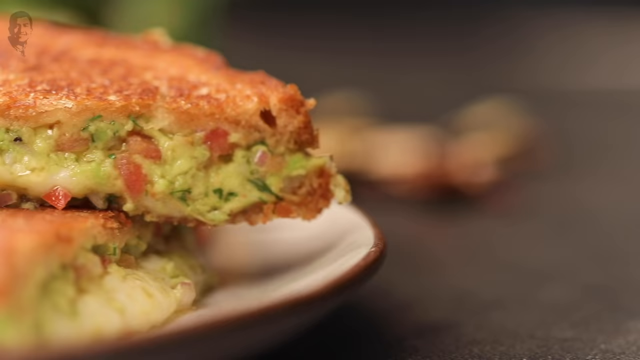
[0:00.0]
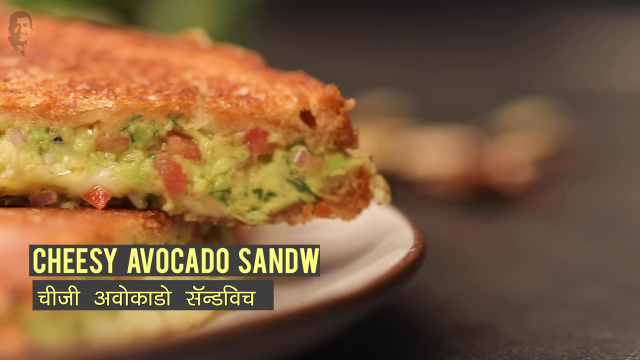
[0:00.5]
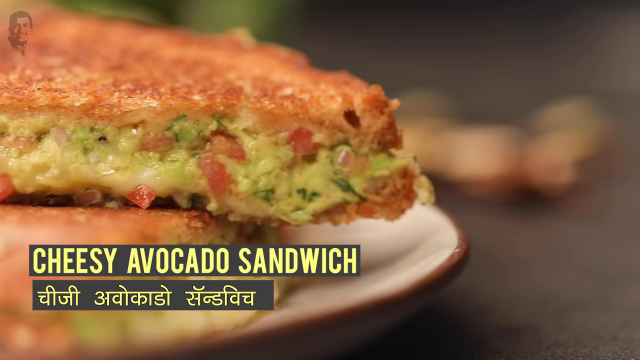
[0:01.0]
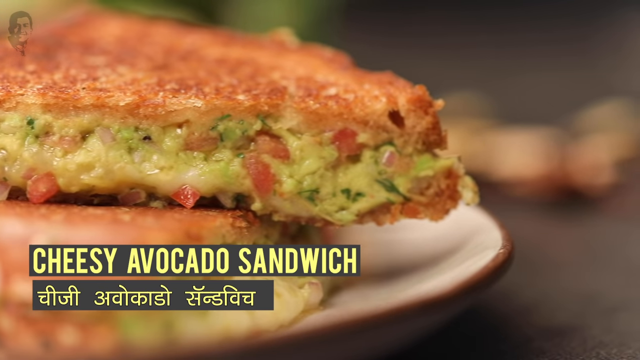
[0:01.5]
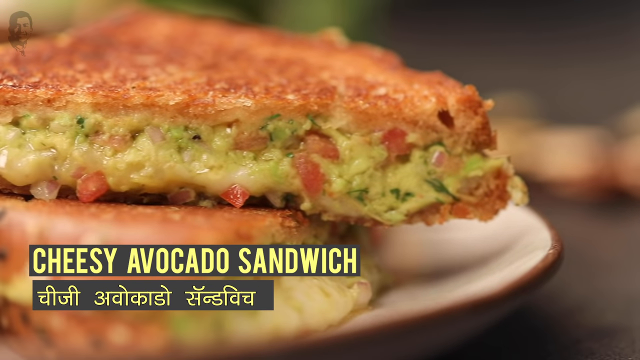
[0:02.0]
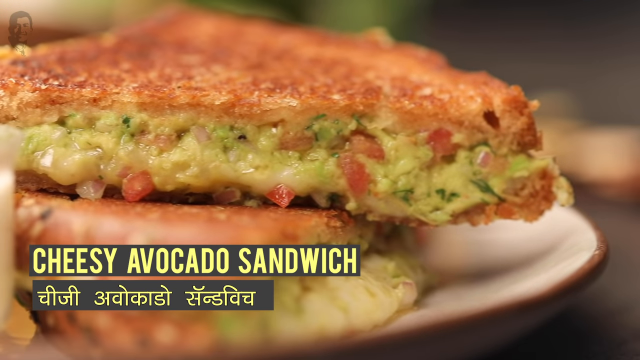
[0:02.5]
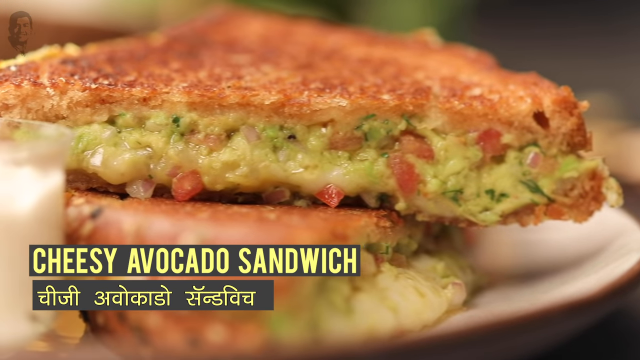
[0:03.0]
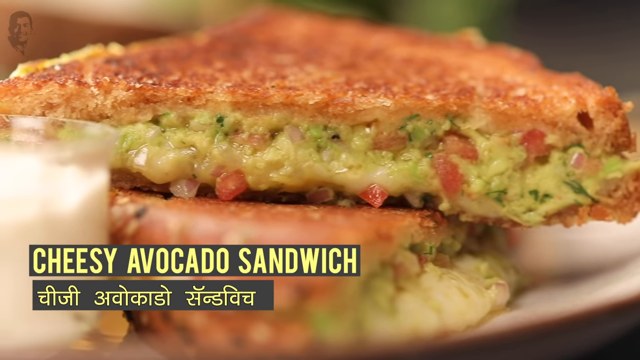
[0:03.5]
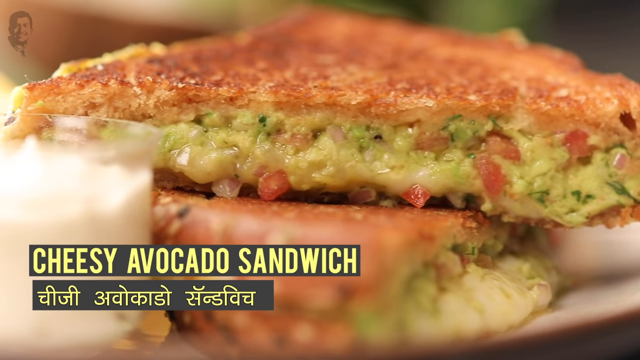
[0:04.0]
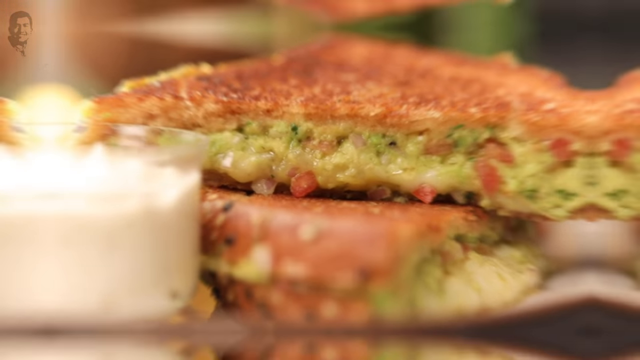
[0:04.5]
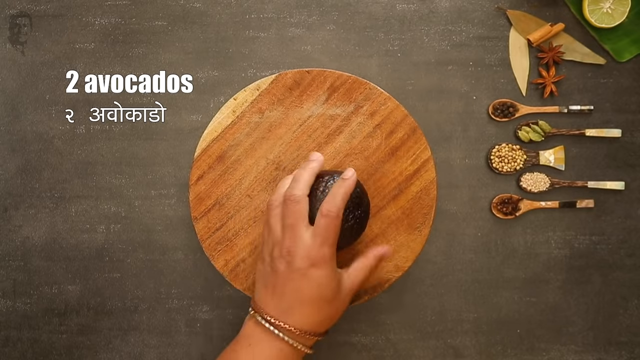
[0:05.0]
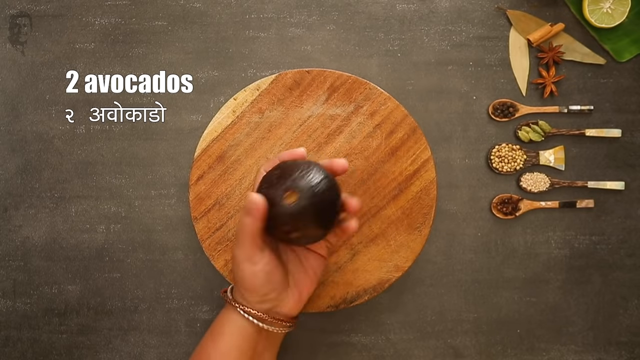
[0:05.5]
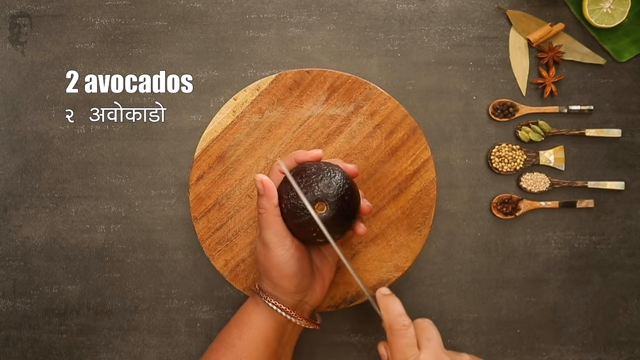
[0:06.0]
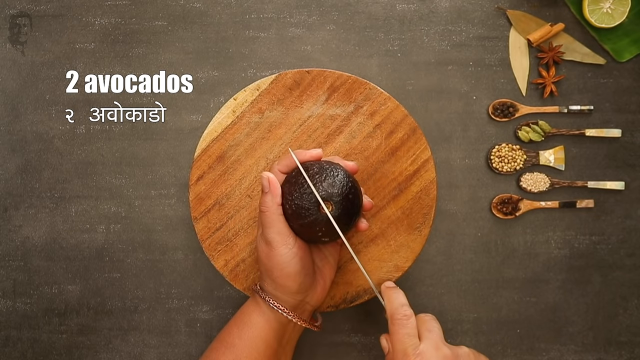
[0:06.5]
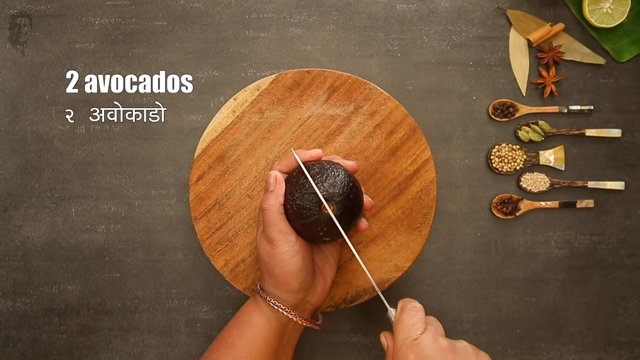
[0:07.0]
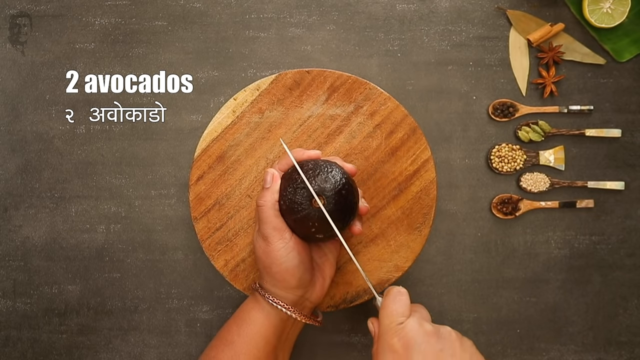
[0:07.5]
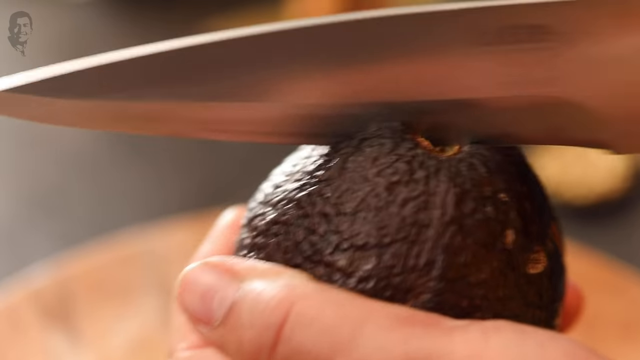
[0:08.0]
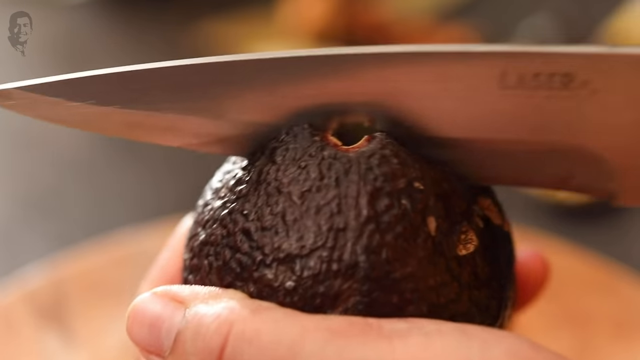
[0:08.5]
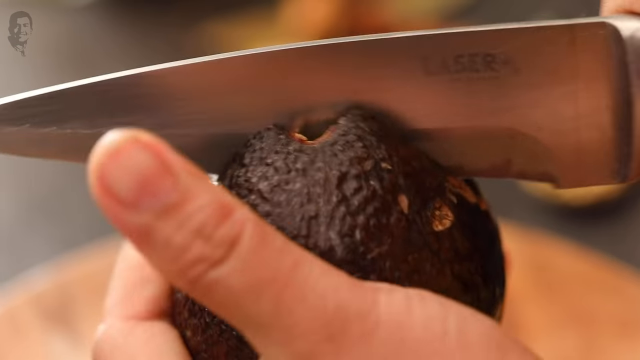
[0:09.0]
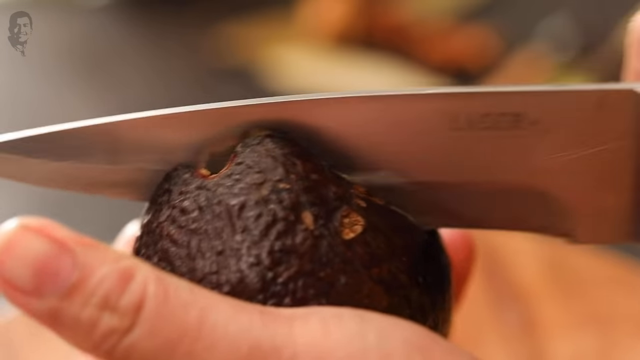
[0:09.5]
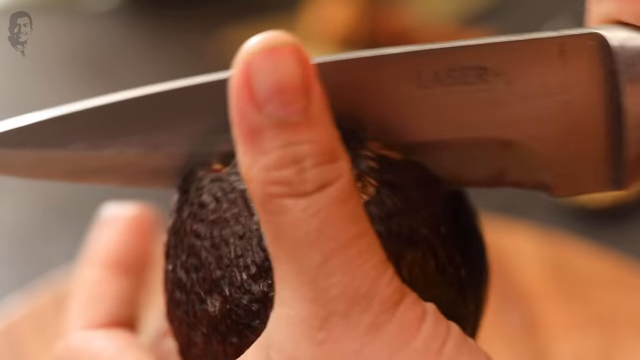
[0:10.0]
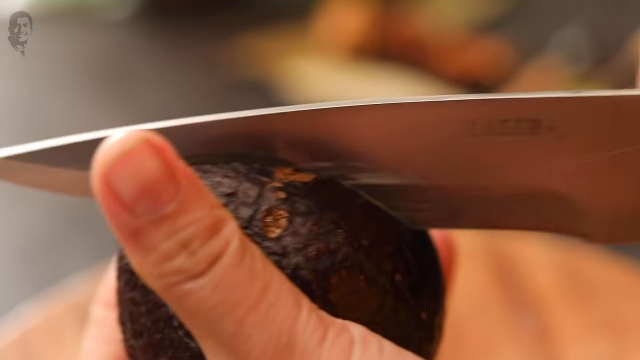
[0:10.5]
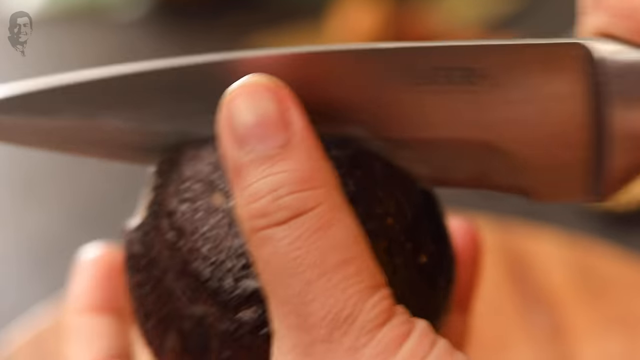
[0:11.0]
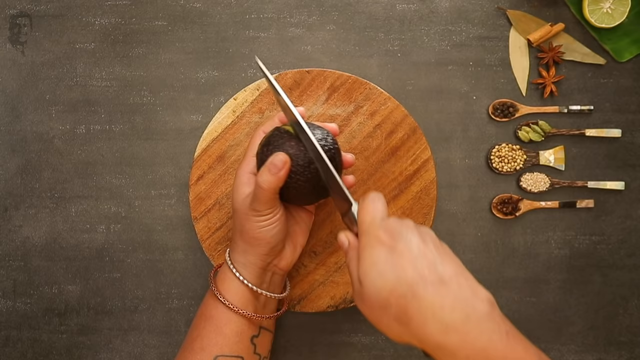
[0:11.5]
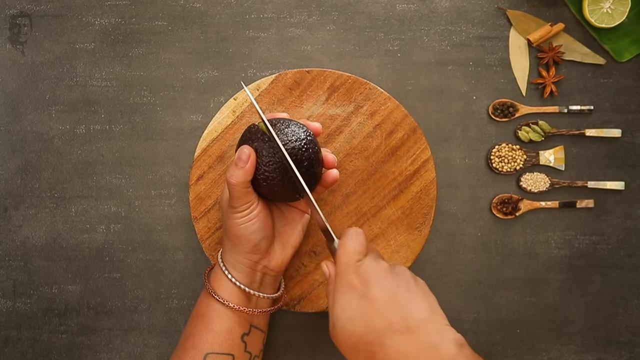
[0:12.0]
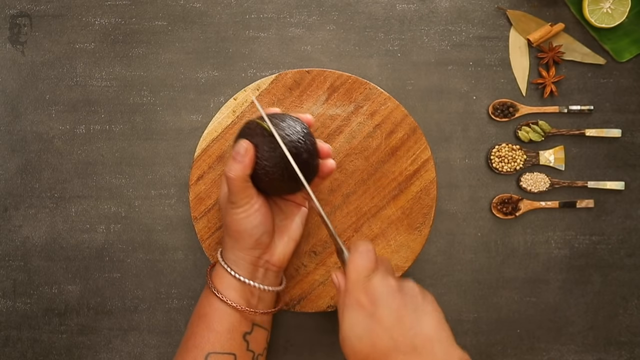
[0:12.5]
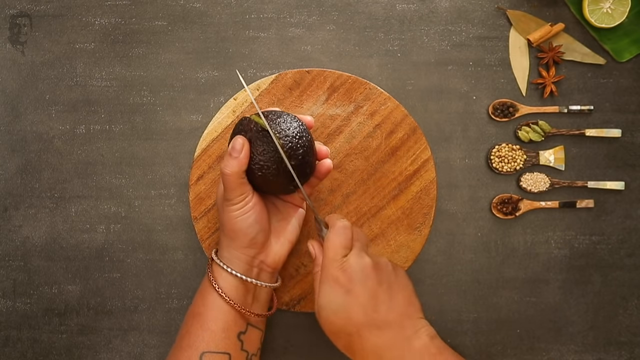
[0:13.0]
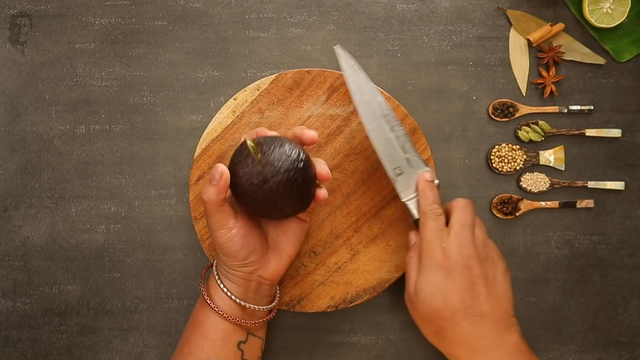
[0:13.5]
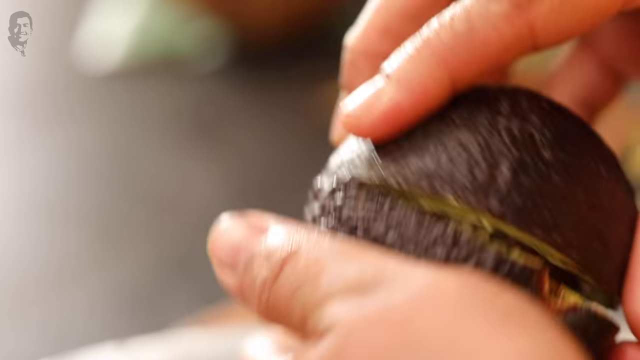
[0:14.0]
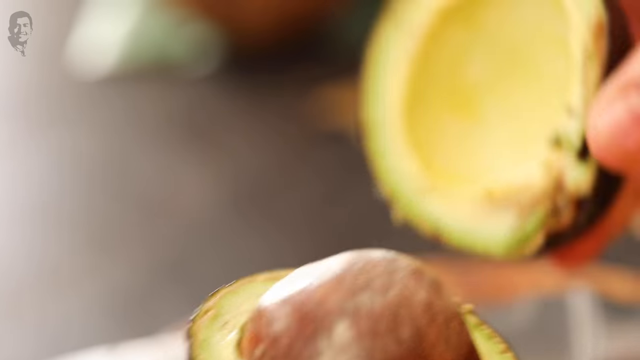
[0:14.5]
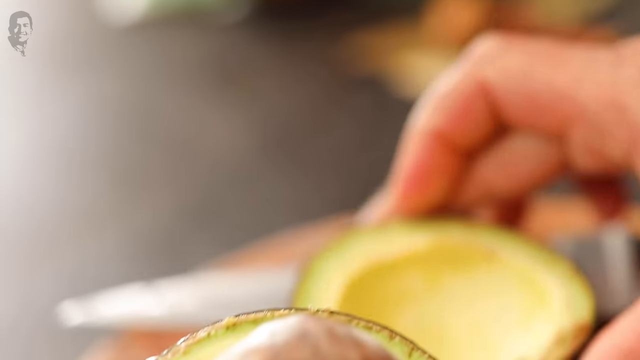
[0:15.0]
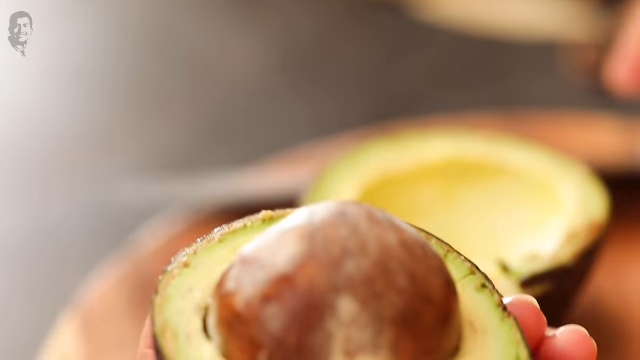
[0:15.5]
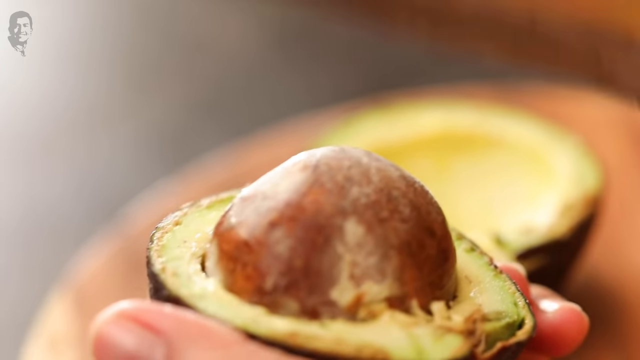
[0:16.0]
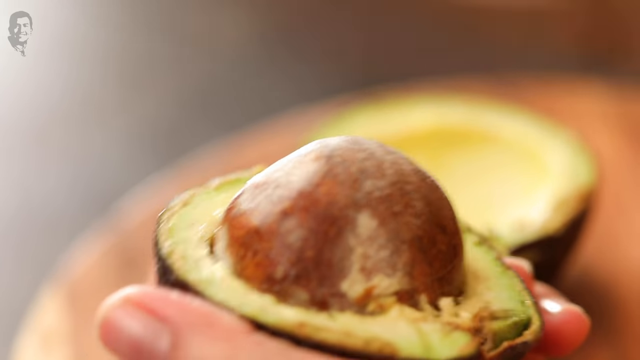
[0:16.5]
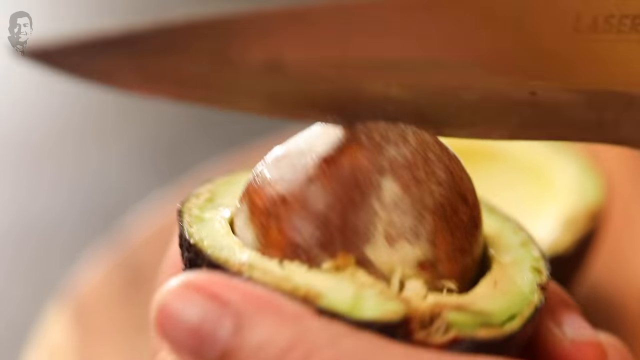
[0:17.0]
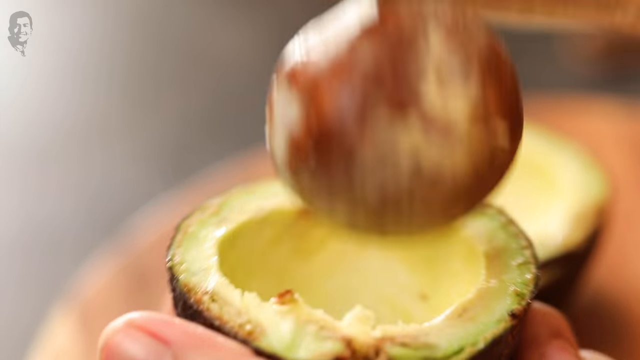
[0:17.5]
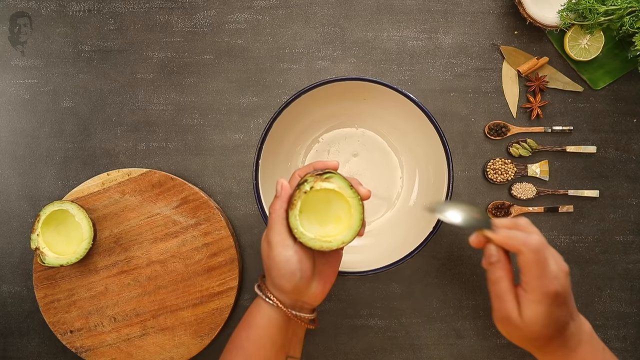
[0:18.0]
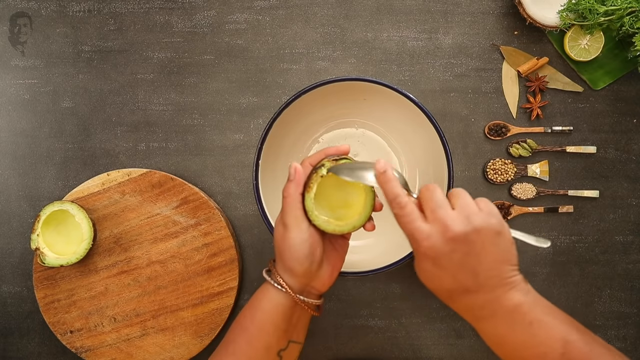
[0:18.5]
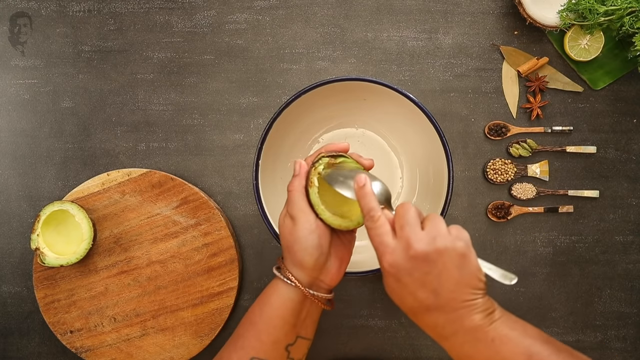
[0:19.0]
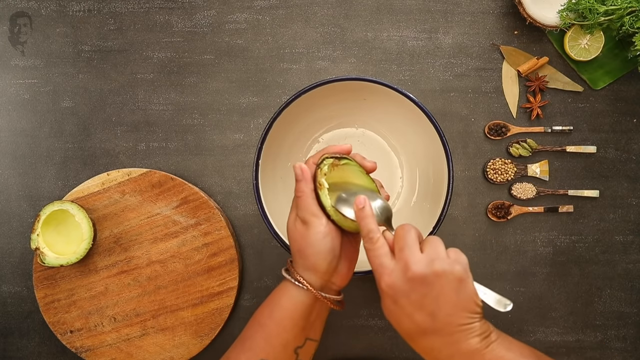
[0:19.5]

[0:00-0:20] A Cheesy Avocado Sandwich is the subject. English text appears on screen, apparently subtitles, since the video seems to be in another language, maybe Thai. First a sandwich is shown on a plate. Then a young woman has an avocado on a round wood cutting table. She cuts the avocado in half and twists it so the top comes off. She bangs a big sharp knife into the pit, which pulls the pit right out. She then spoons out the green avocado flesh into a white bowl with a blue line across the top. At the very beginning, on the right-hand side, she has several little spoons, each seeming to hold some kind of herbs or ingredients.